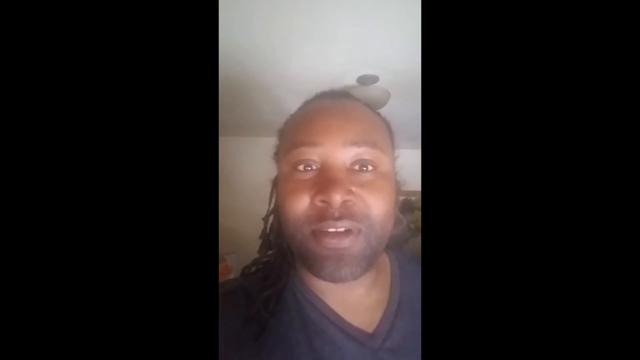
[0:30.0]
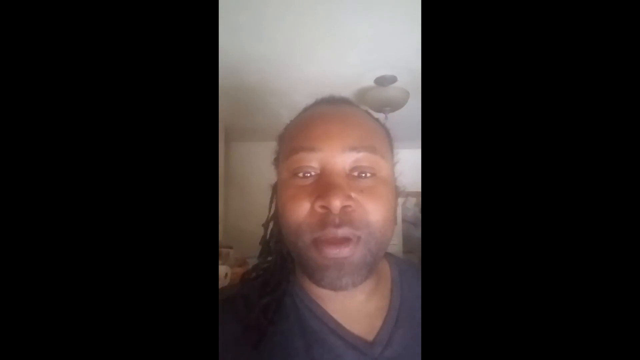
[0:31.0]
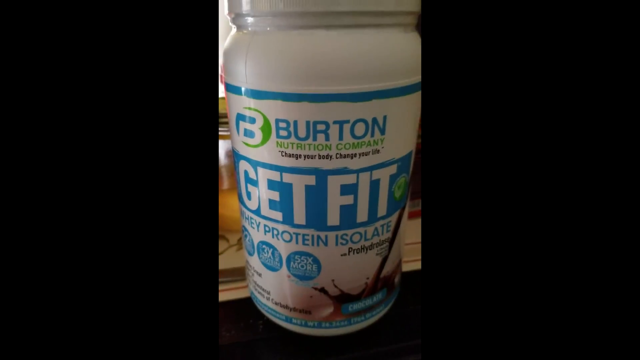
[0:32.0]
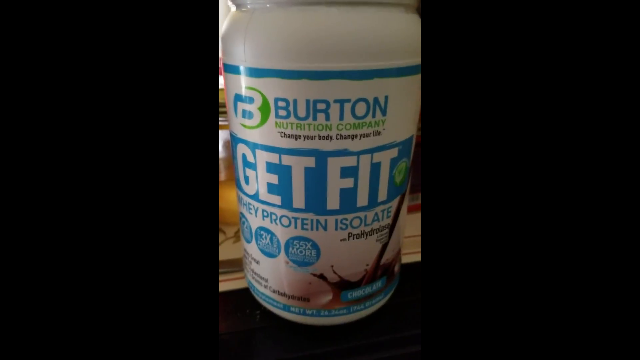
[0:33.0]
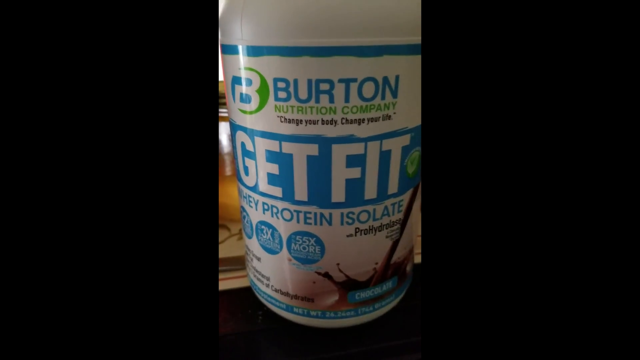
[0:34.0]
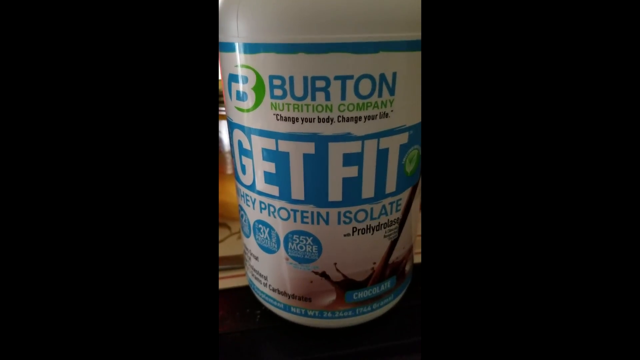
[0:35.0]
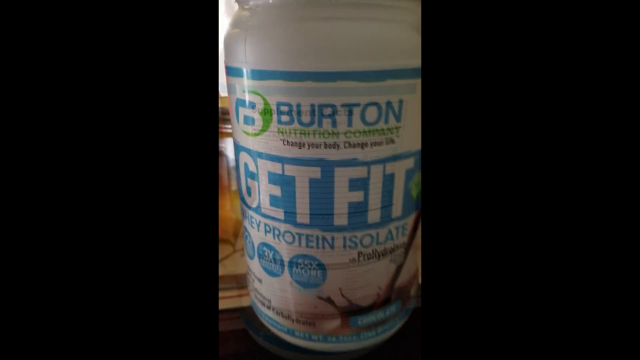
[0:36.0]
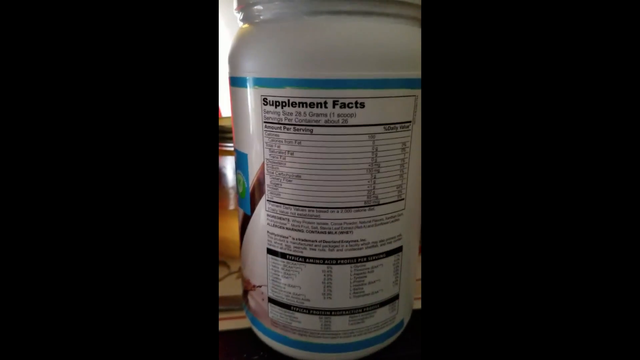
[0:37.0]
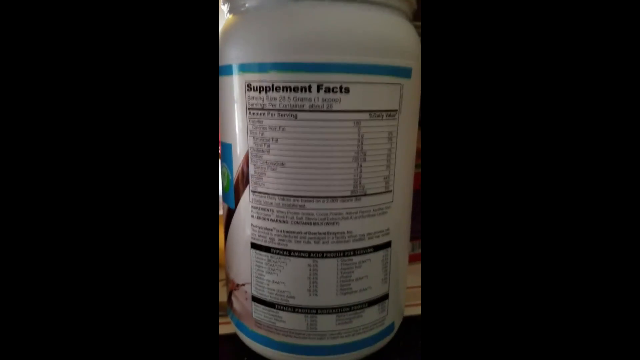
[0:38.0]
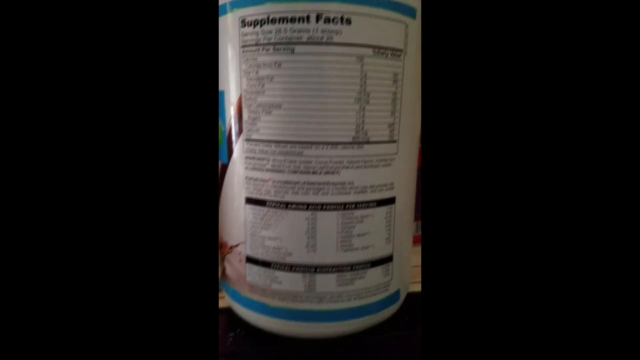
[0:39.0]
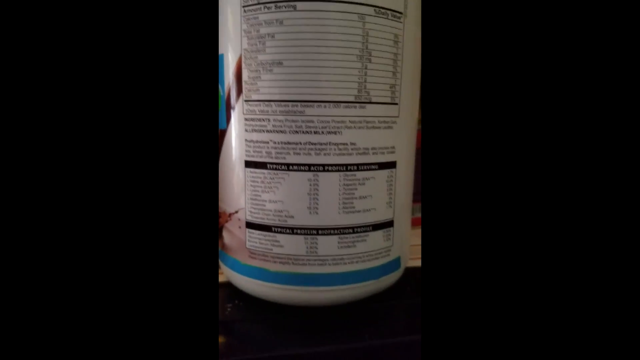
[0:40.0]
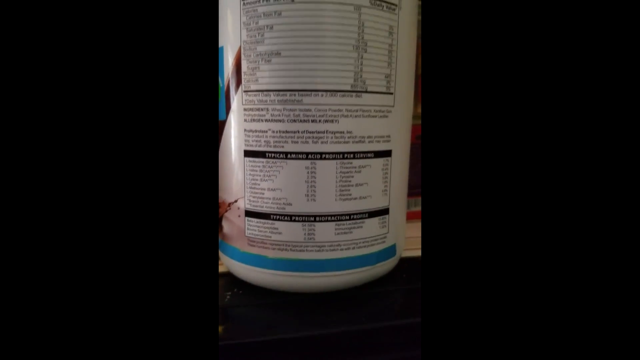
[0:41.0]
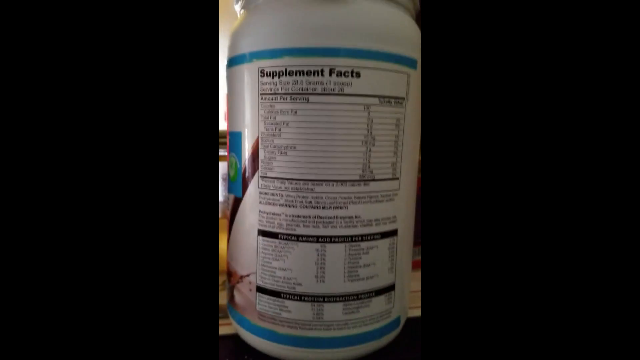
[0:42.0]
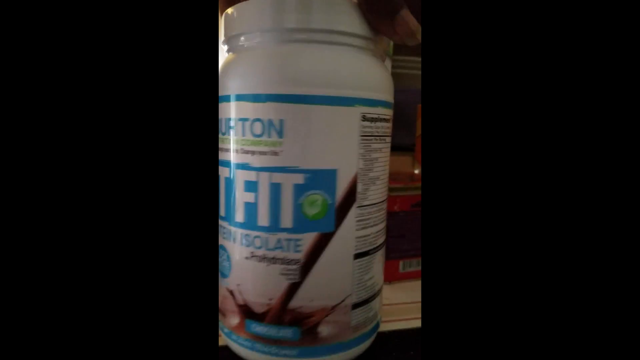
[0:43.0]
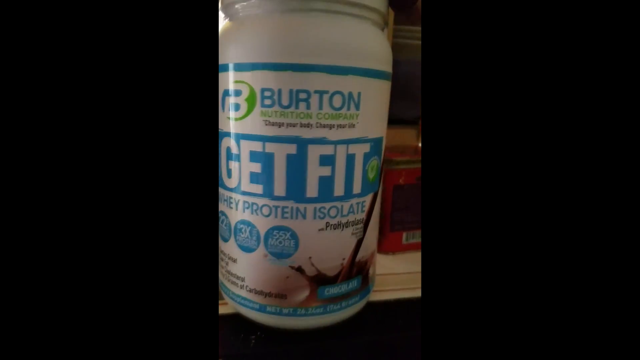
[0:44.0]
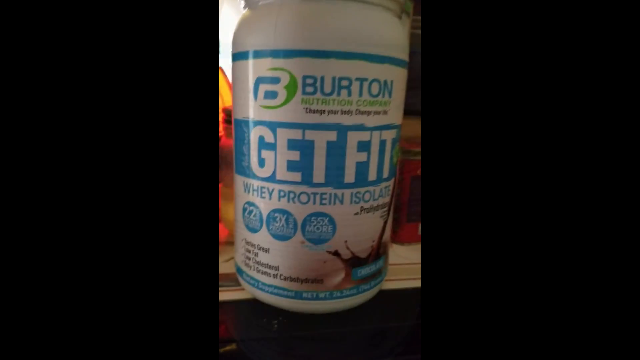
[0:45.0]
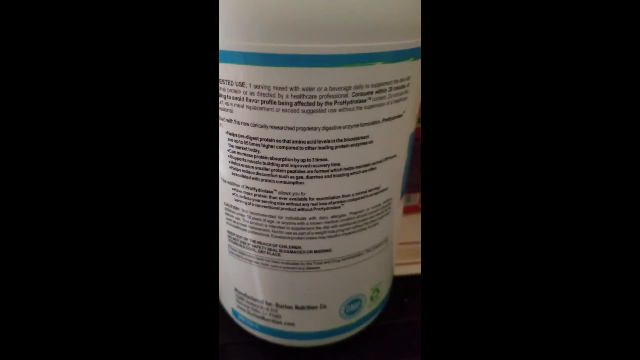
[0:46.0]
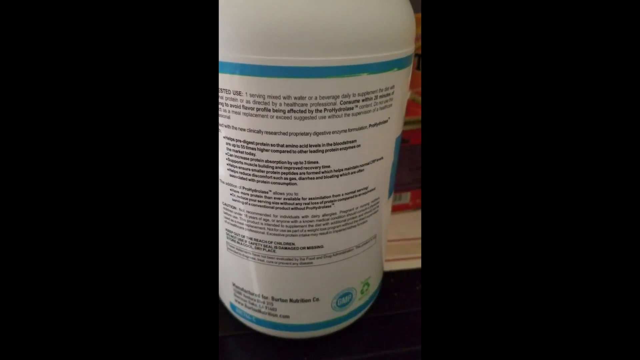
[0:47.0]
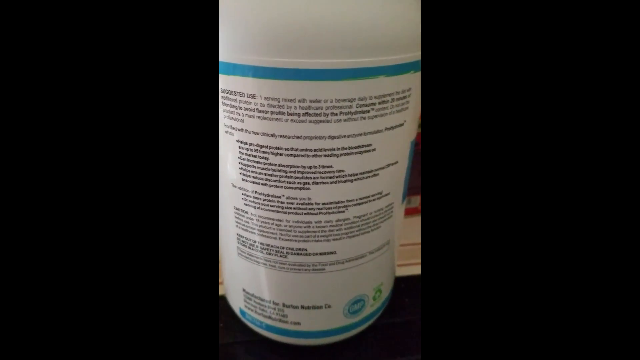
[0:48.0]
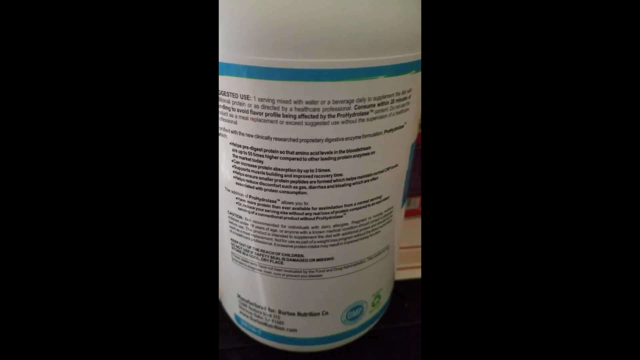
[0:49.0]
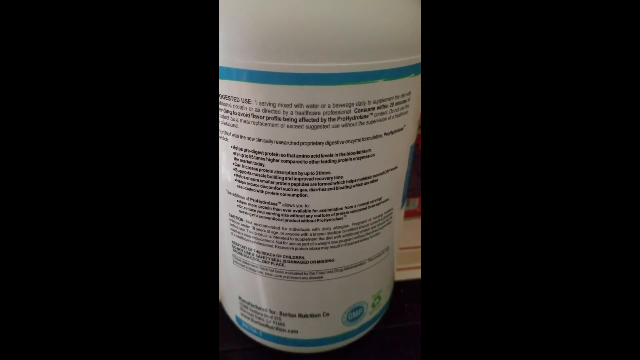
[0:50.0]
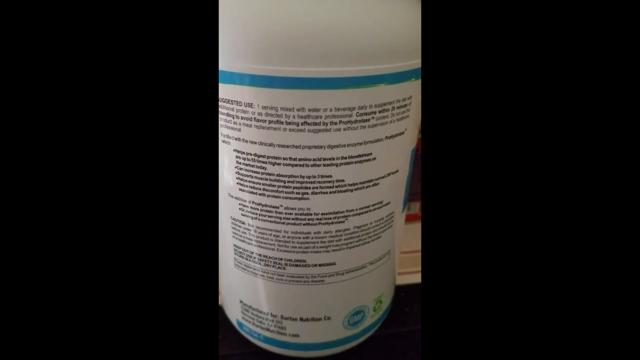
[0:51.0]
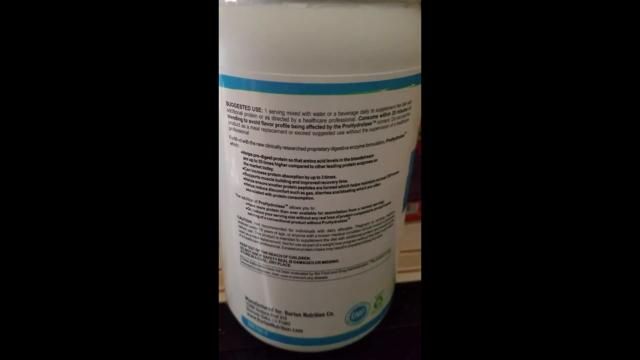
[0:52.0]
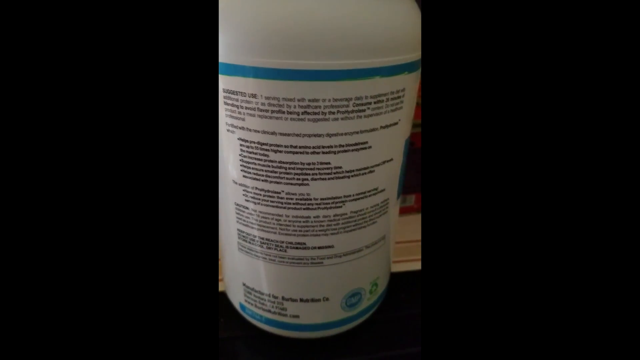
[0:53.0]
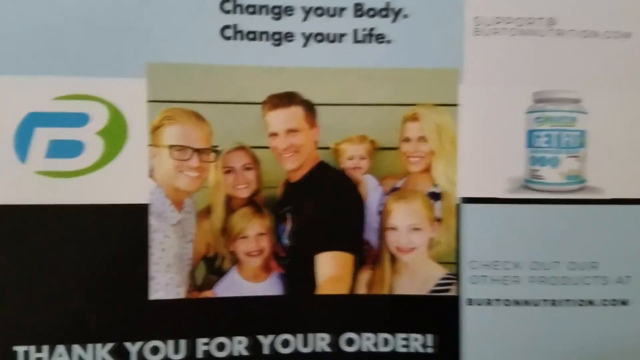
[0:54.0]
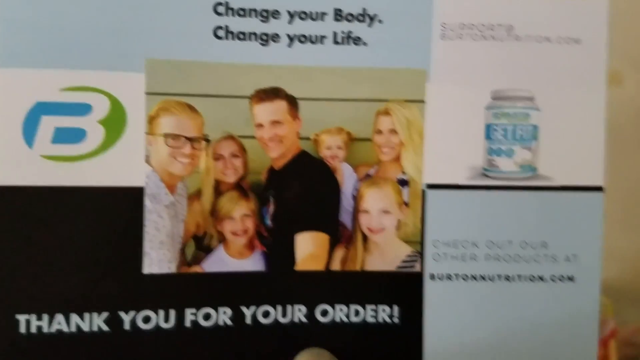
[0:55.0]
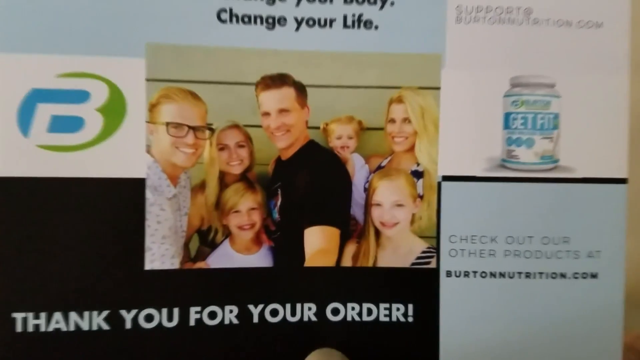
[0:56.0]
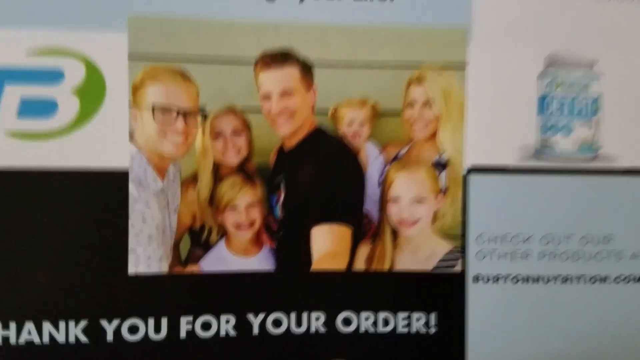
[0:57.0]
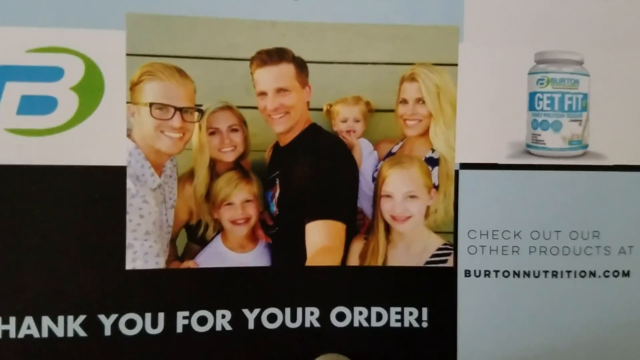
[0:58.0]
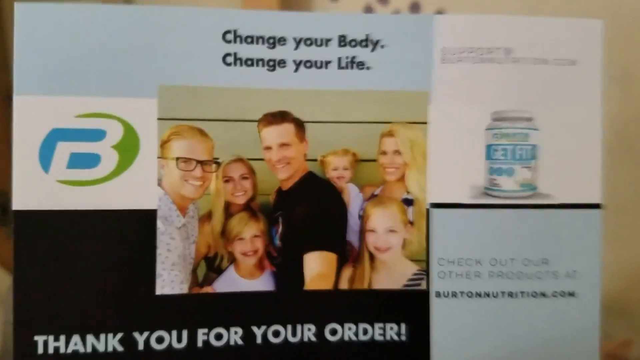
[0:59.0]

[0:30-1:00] The same man talks directly to the camera inside the room. He is a black man in his 20s or 30s with his hair pulled back, and only a little of the background is visible. Next, a bottle is shown. It says "Burton Nutrition Company. Change your body. Change your life. Get fit." and it is a whey protein isolate. The supplement facts are visible on the back of the bottle, though the writing is very small and hard to read. It appears to be a very large bottle, and it is turned to show more information on the back. The video then changes to what looks like an ad for the supplement: a group of people standing and smiling at the camera. At the top it says "change your body, change your life." On the right side is an image of the bottle, and underneath the image it says "check out our other products. Visit us at www.BustOnNutrition.com".